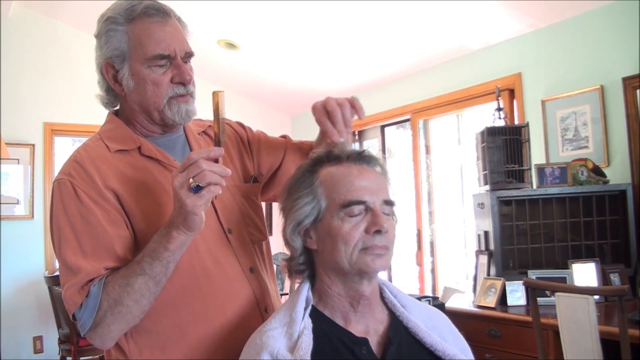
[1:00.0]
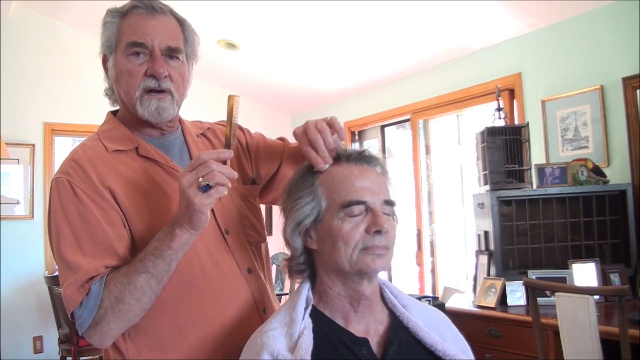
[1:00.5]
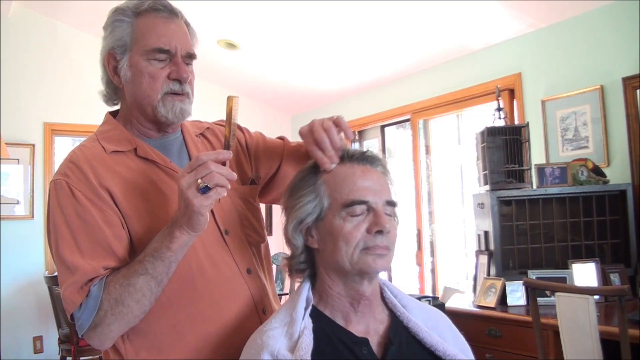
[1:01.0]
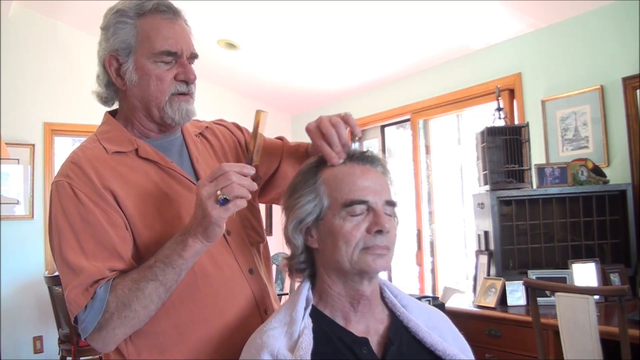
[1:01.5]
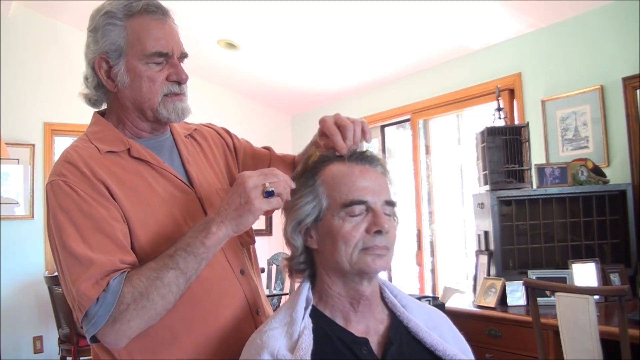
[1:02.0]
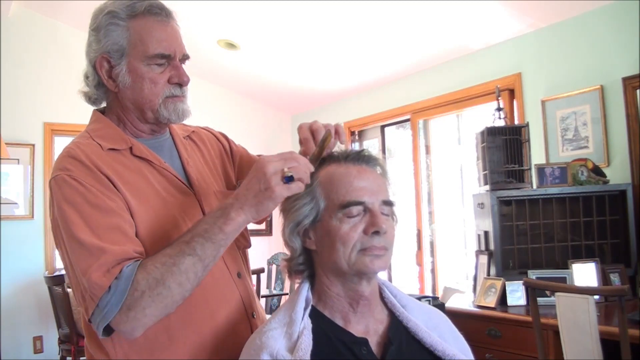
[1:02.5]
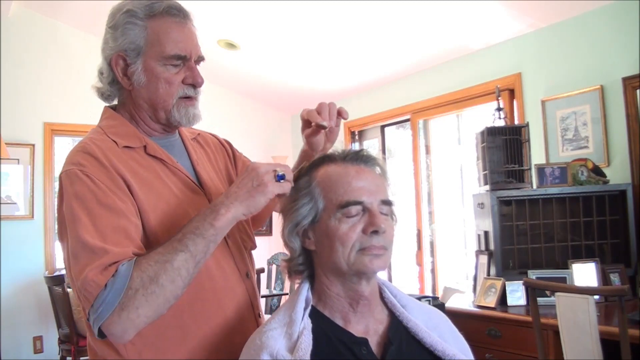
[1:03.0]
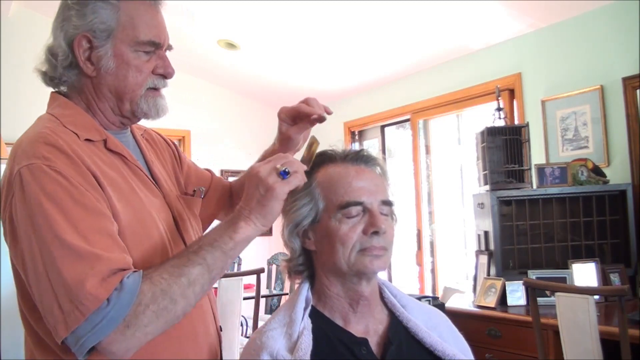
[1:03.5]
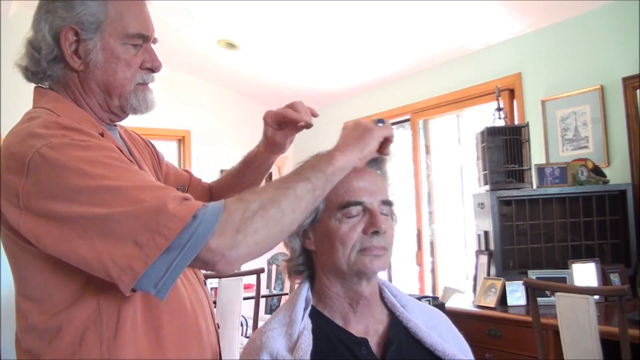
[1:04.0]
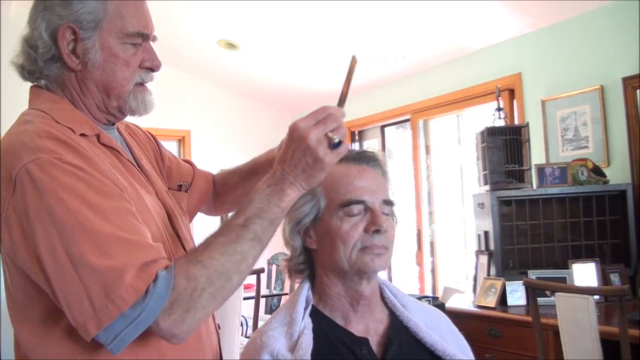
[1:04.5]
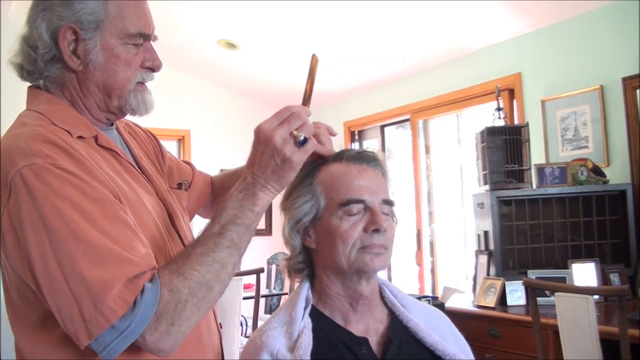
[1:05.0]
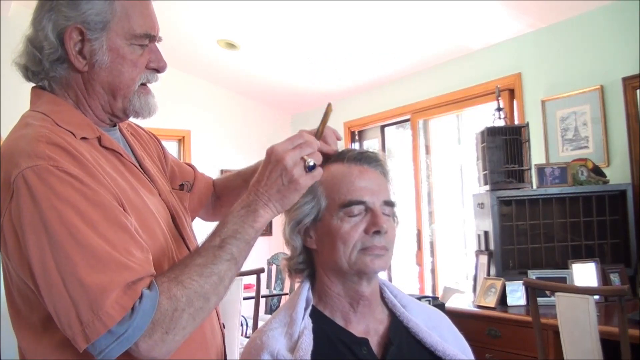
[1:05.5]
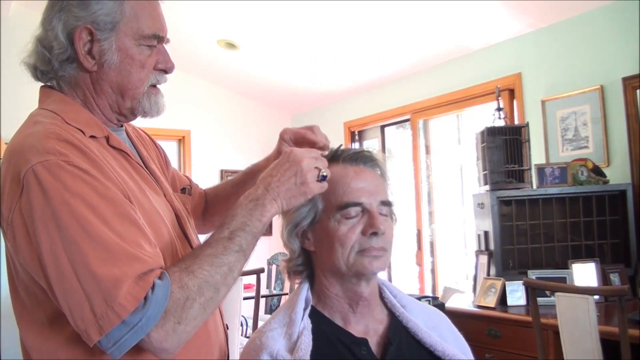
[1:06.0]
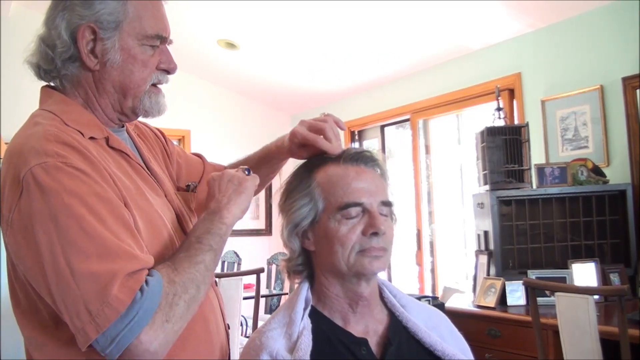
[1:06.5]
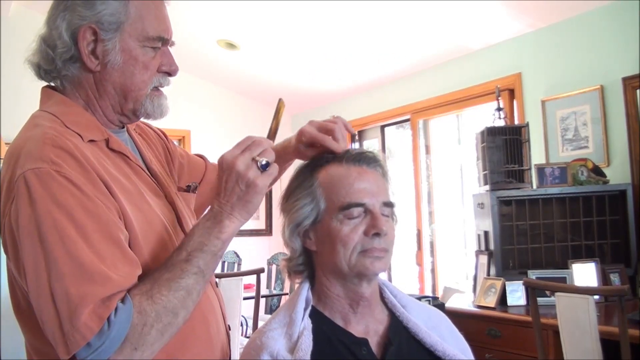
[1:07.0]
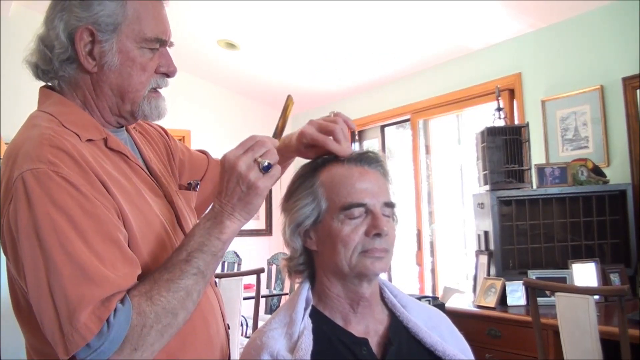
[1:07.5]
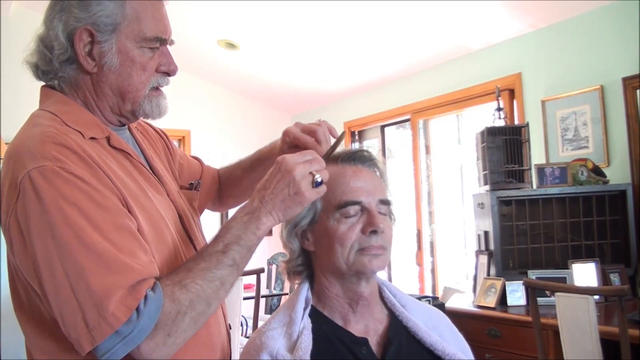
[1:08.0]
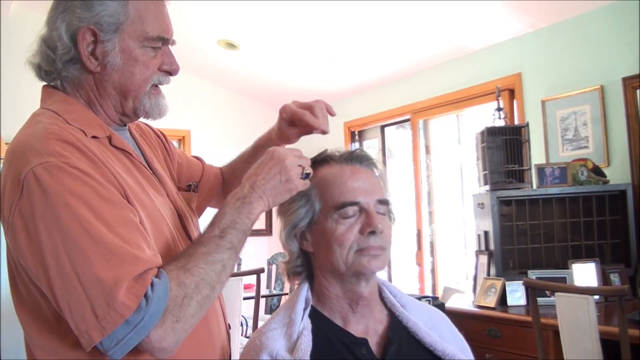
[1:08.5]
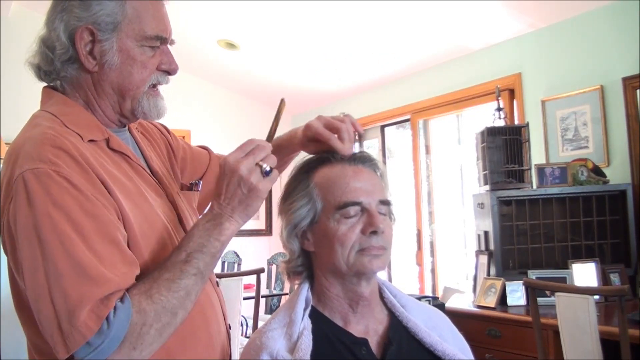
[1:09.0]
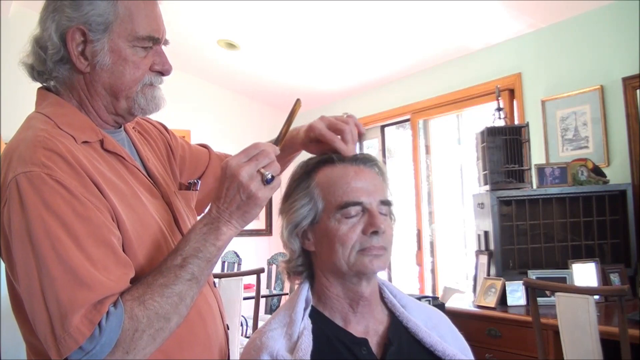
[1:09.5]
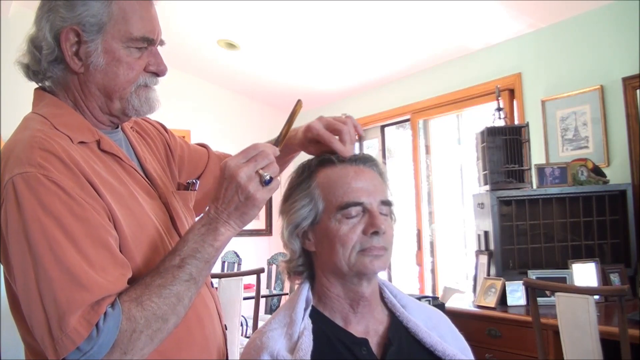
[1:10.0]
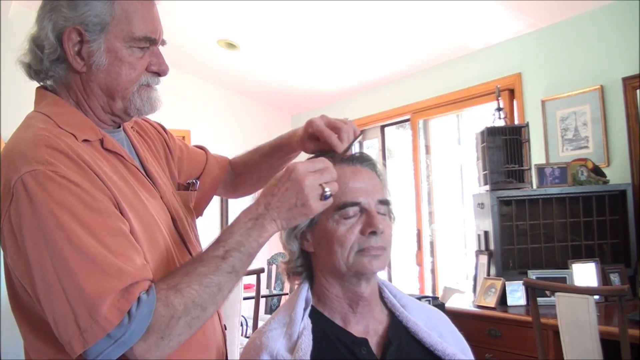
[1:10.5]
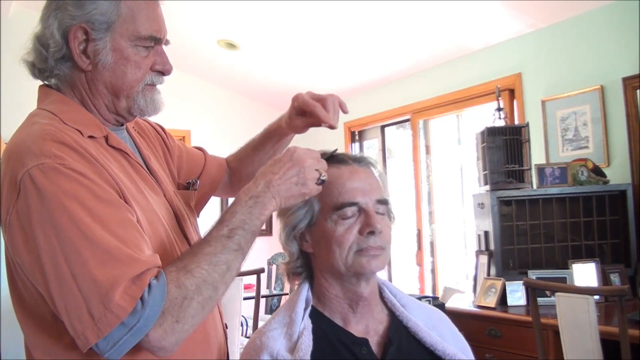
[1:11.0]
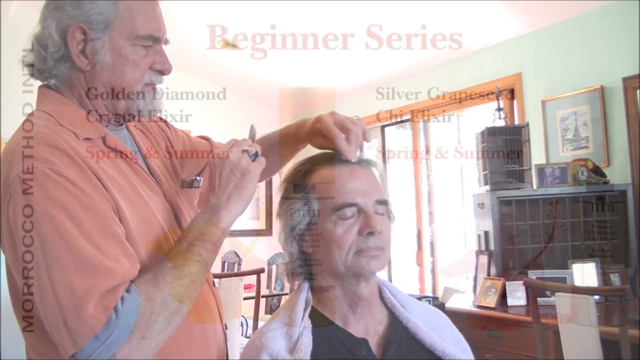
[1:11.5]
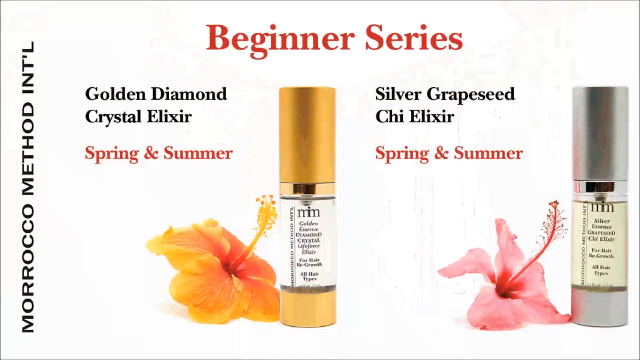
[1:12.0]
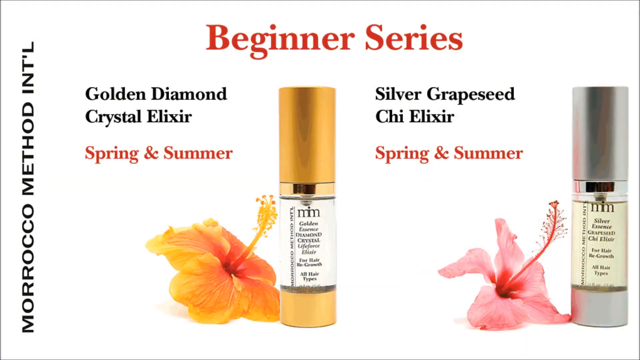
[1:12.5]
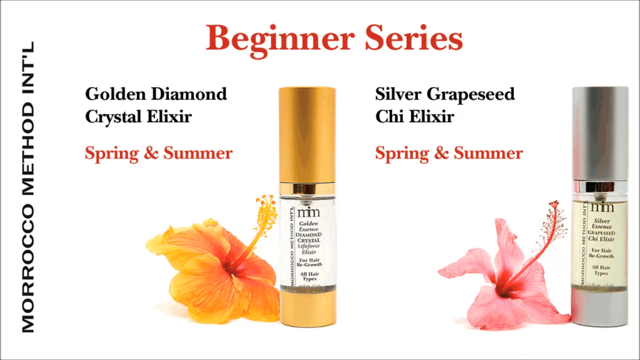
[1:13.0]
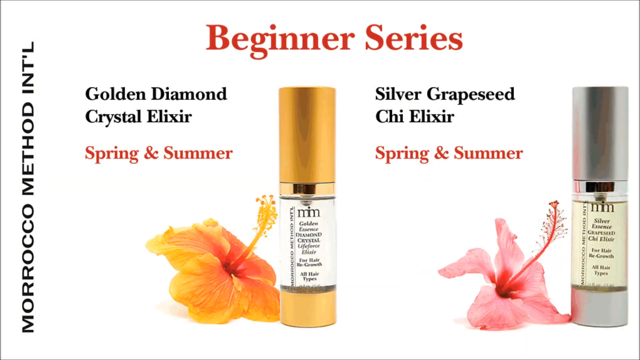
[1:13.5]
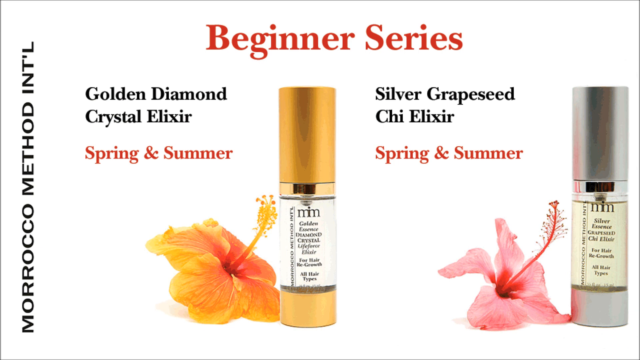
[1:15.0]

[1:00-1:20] A hair stylist works on a client. The client is sitting, wearing a black shirt with a towel around his shoulders. The stylist wears a peach button-up shirt, with four buttons visible, over a gray T-shirt. He holds the comb in his right hand and rubs the client's hair with something in his left hand. He looks at the camera and speaks to it as he parts the hair, rubbing the client's hair after every part. The video then moves to an informational screen with a white background that reads "beginner series" across the top. A gold-colored can has a white label reading "golden diamond crystal life force elixir all hair types," and a similar silver-colored product reads "silver essence grapeseed elixir for hair regrowth all hair types." Next to the gold can is the text "golden diamond crystal elixir spring and summer," and next to the silver can is text beginning "silver grapeseed" and ending "elixir spring and summer." A pink daisy-type flower is next to the silver can and a yellow daisy-type flower is next to the gold can. Vertical text reads "Morocco method international."